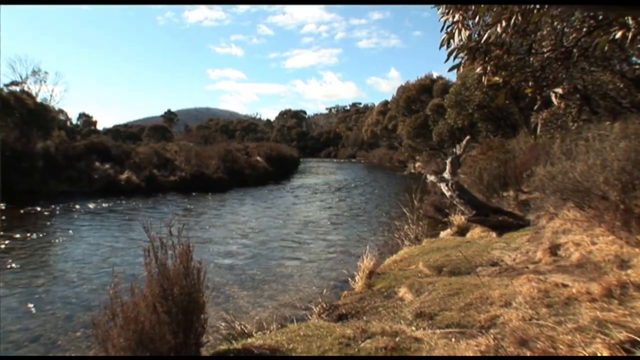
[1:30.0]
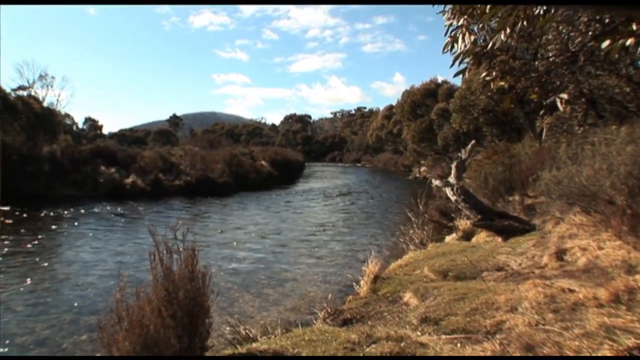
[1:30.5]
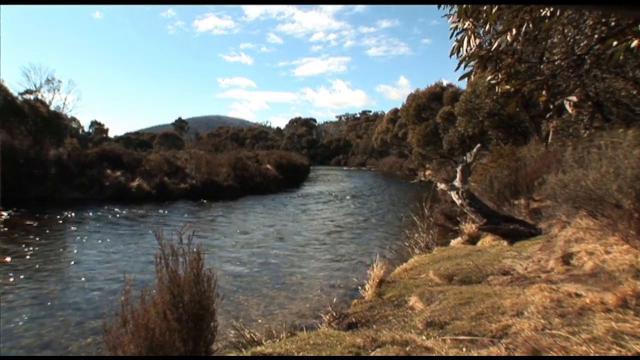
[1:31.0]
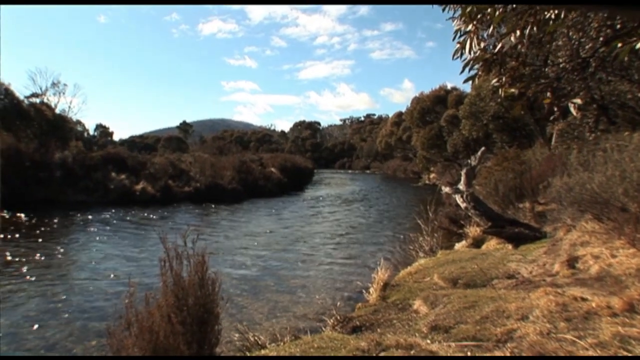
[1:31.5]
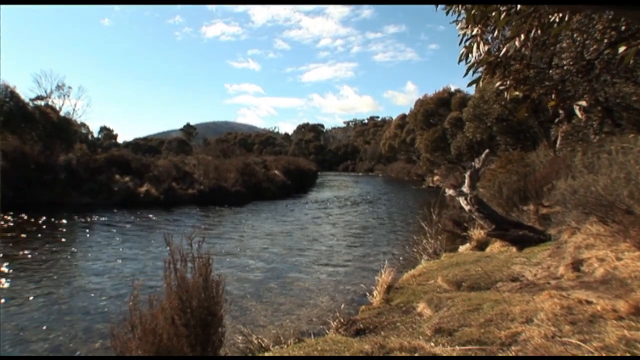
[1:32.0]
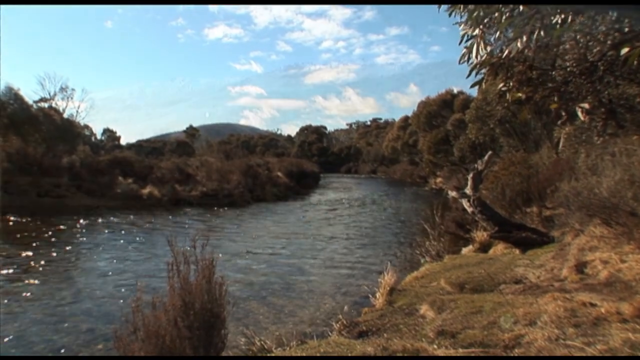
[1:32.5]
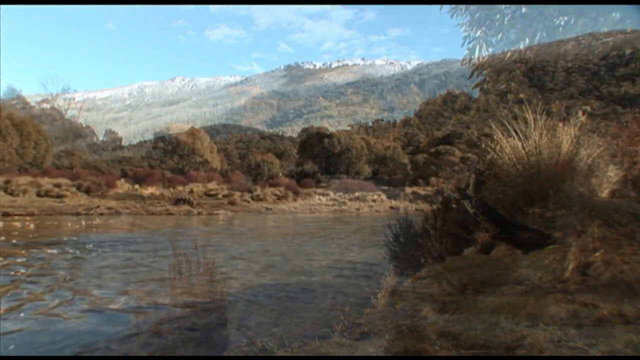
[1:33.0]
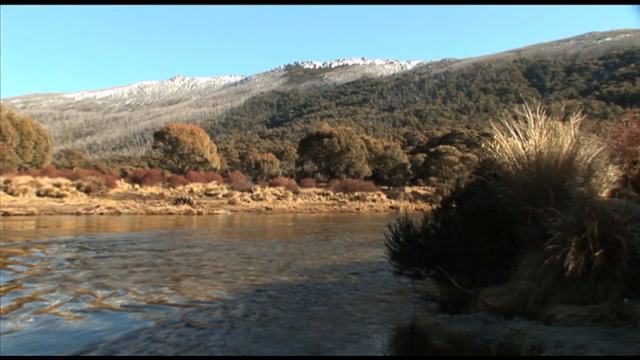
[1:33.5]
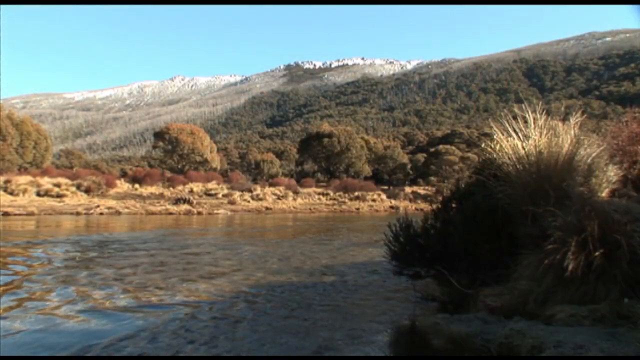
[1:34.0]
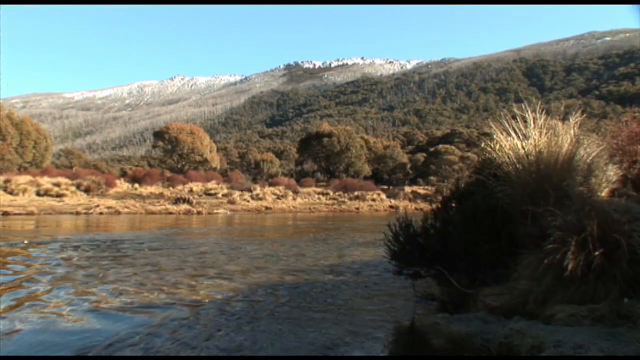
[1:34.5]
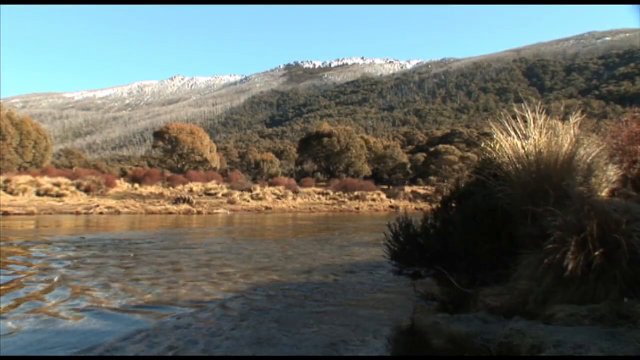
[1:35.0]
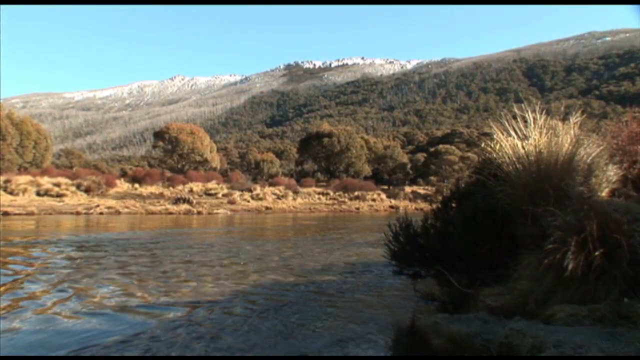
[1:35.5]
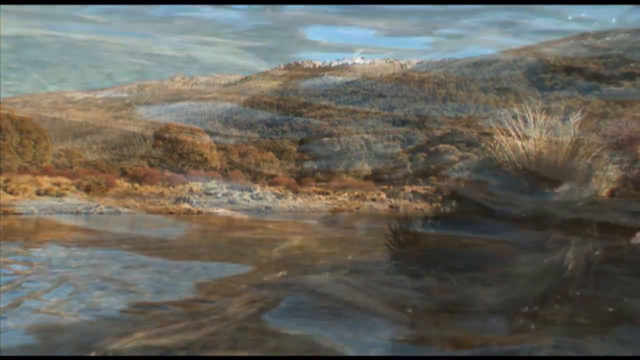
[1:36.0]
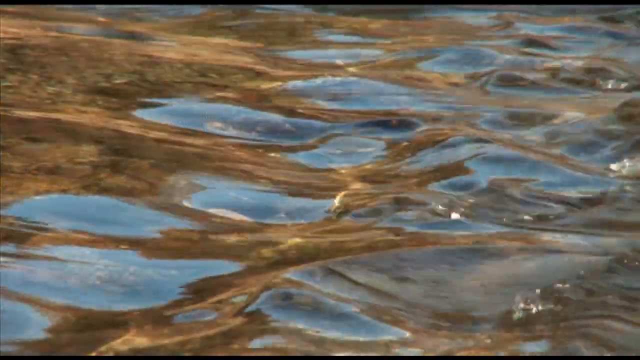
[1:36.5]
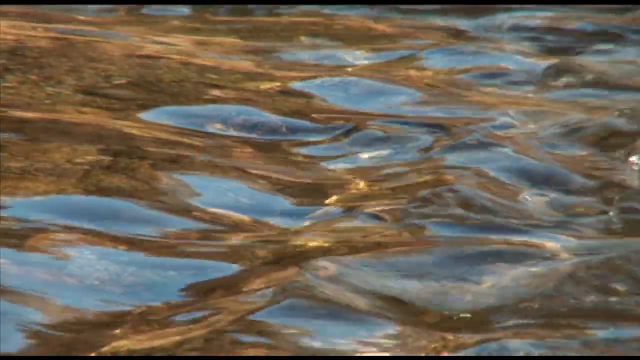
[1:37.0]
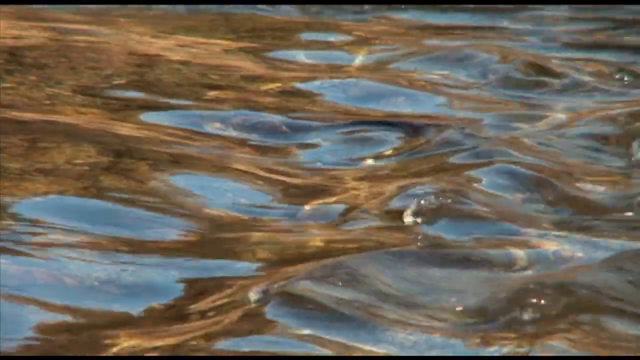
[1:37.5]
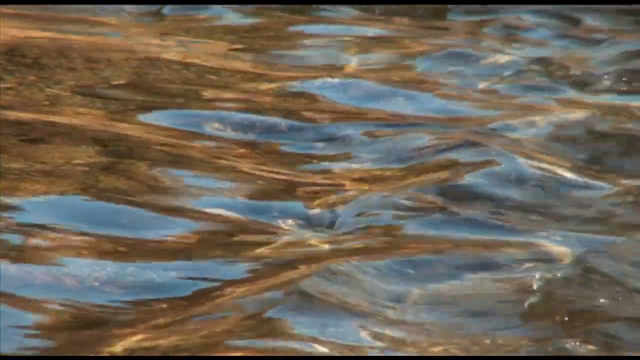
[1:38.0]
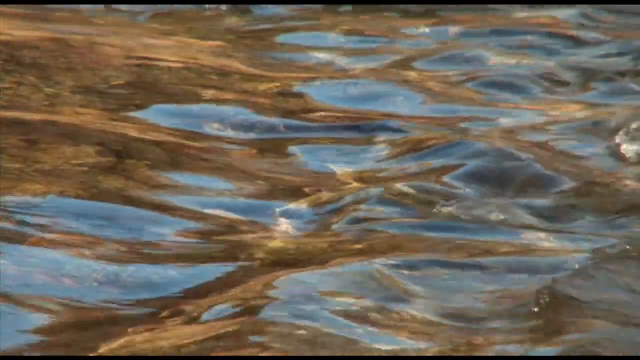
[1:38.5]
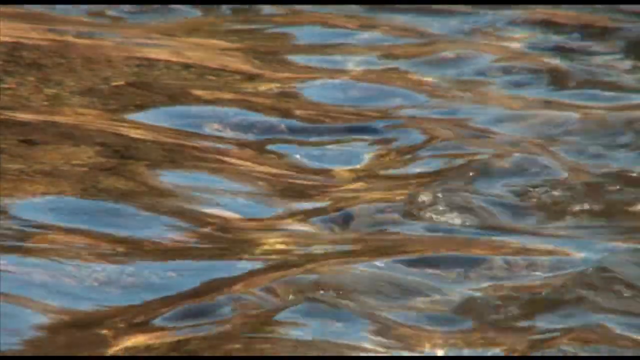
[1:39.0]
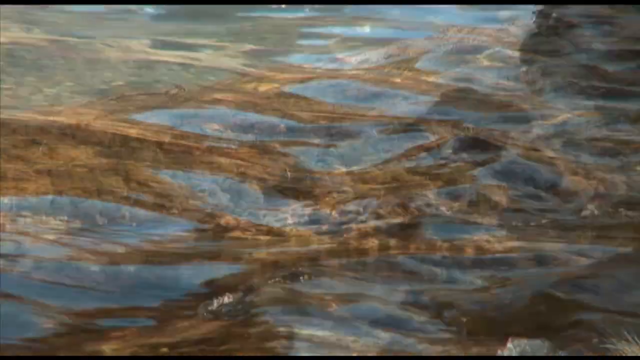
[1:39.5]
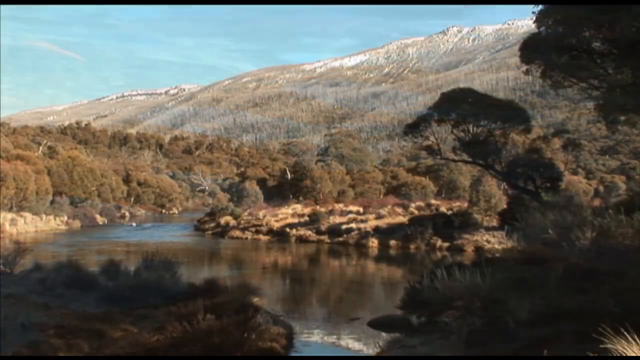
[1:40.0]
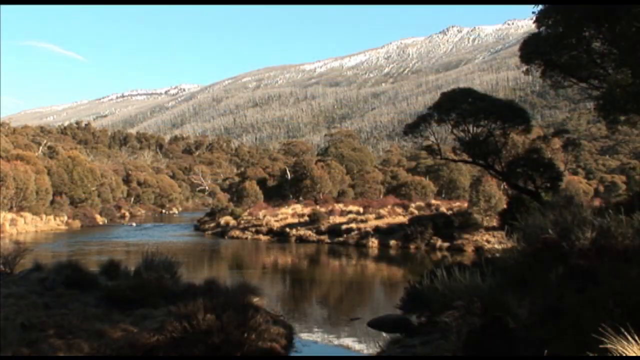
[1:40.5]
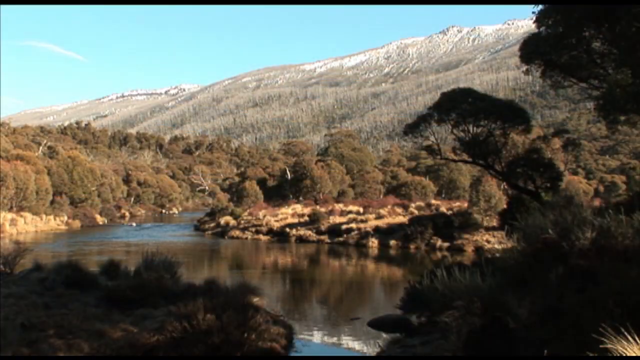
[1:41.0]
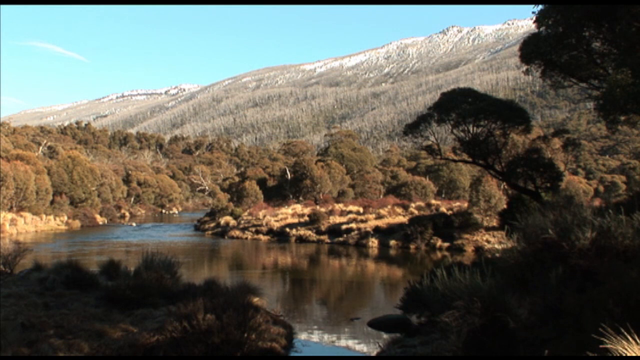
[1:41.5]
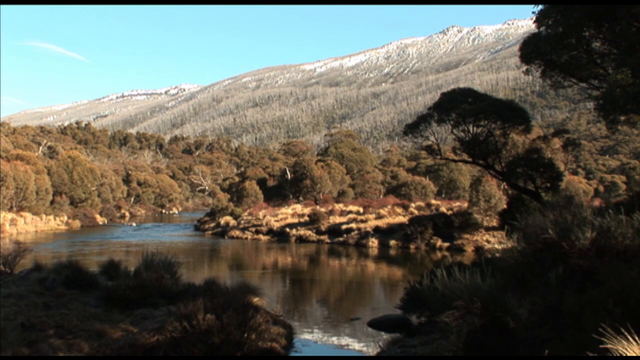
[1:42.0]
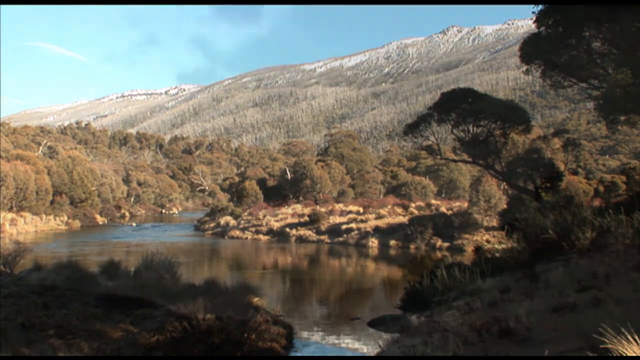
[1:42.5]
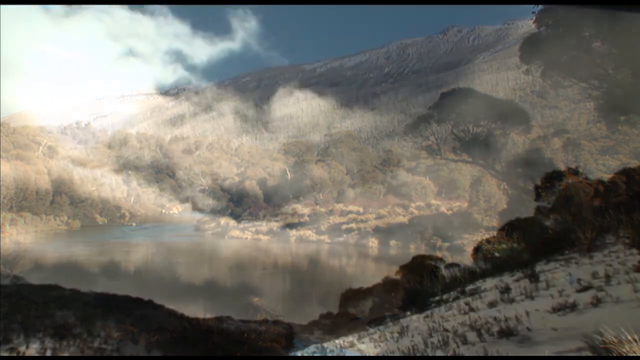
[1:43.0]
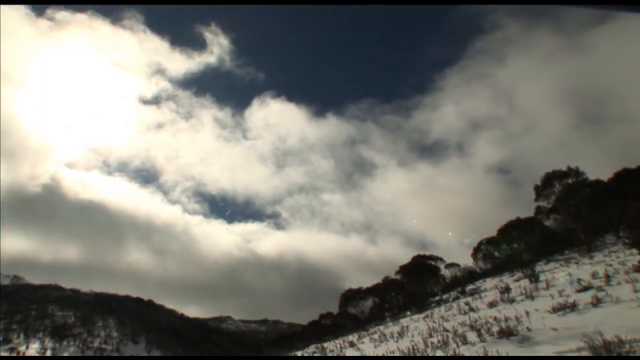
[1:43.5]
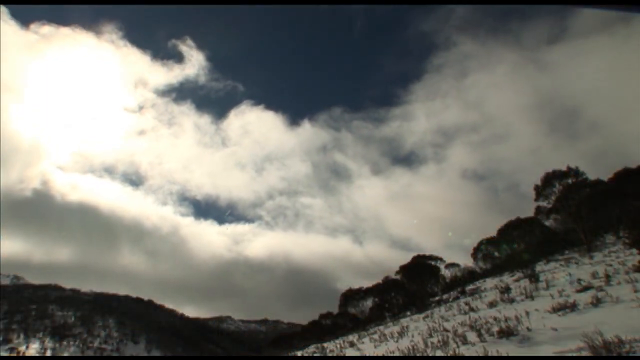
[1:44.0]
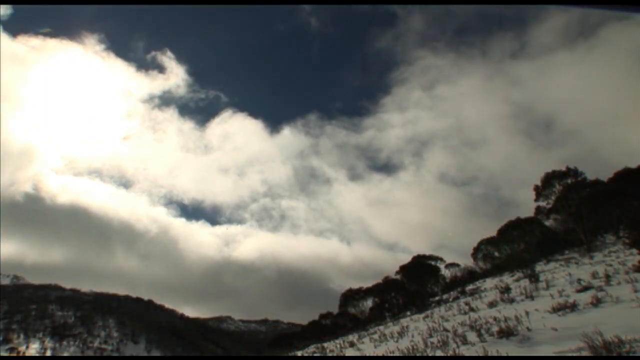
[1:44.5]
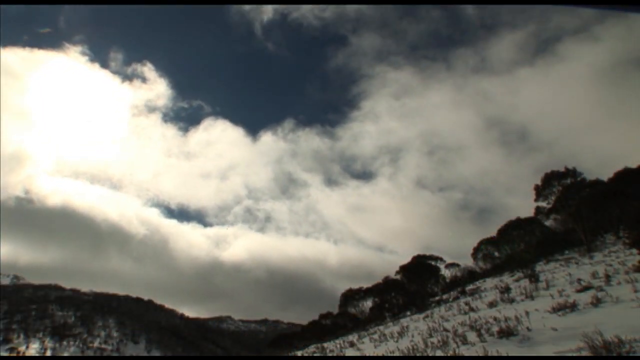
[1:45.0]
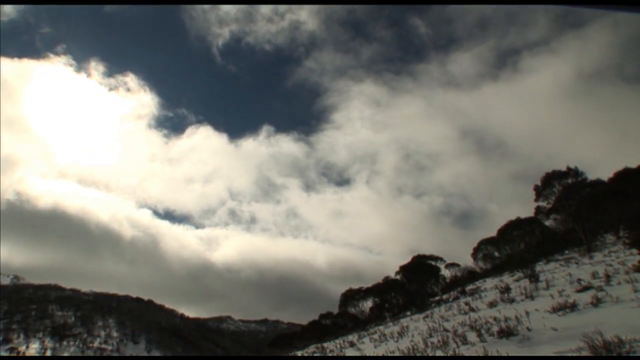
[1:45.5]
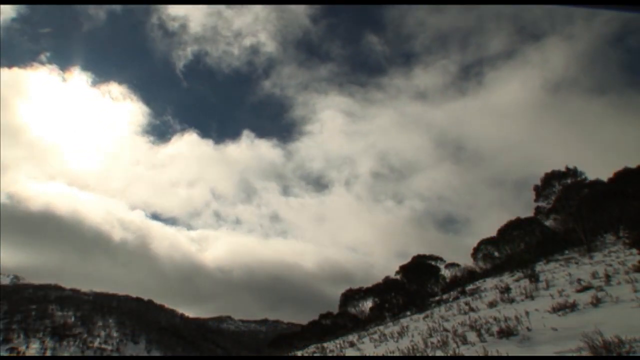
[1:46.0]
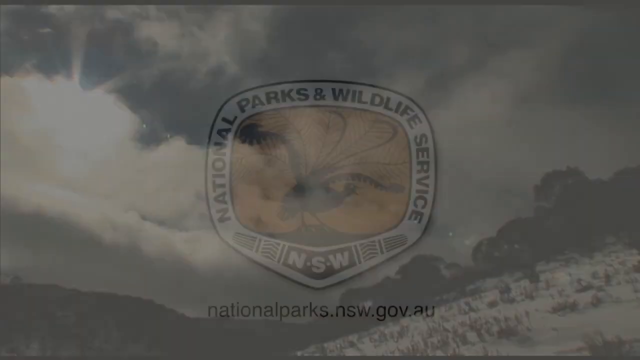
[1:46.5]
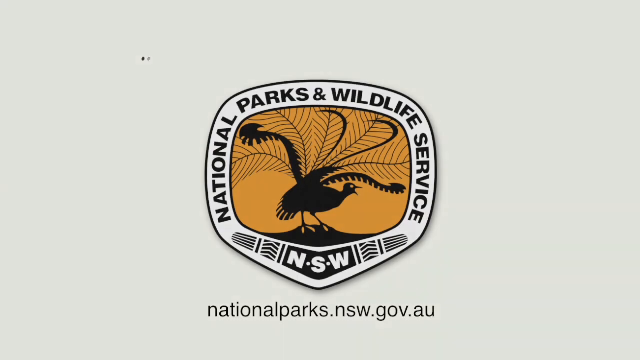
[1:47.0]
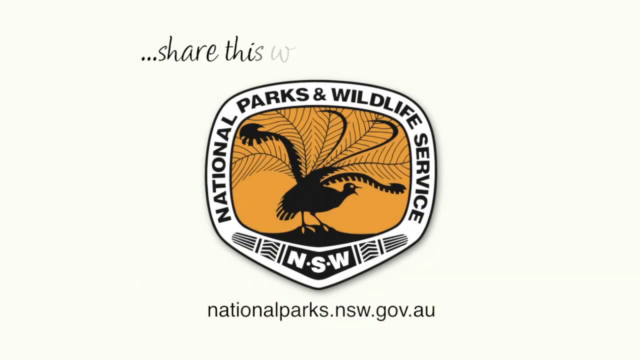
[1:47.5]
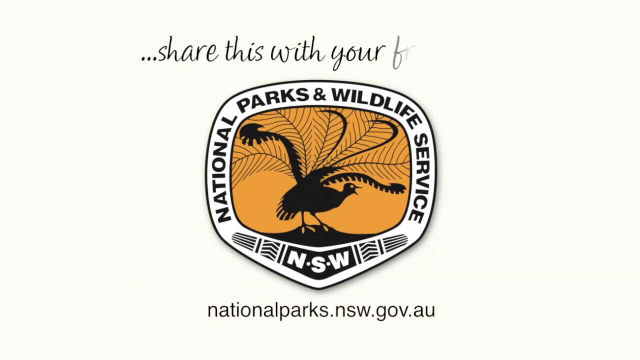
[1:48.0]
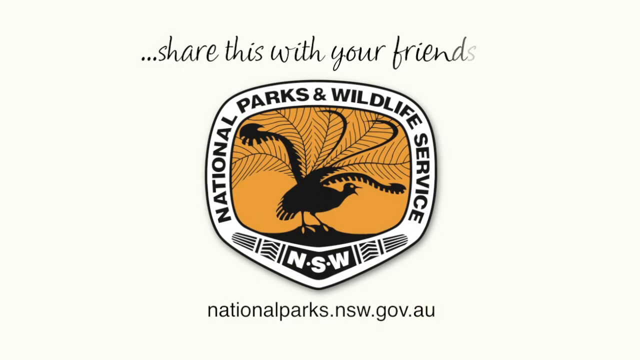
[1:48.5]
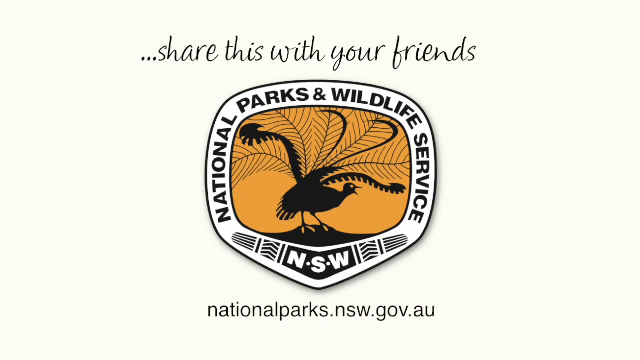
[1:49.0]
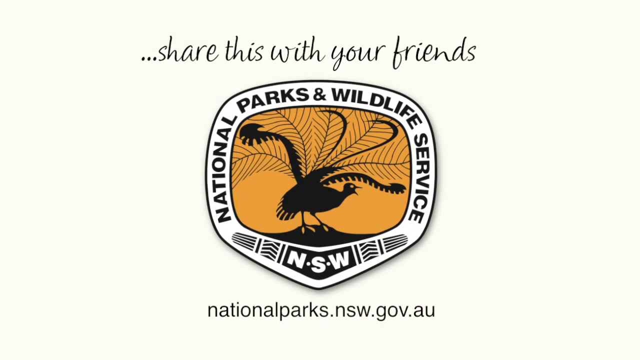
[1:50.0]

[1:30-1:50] The river has a similar kind of S shape, with trees and bushes on either side, a blue sky and white clouds. The shot cuts to the snowy tops of mountains in the back, and then to a close-up of the water rippling as it flows; the water is quite clear, so the bottom of the river can be seen through it. Another scene shows the river at the front and the mountains at the back. Snowy mountains follow, with clouds moving quickly from the right-hand side to the left. The logo from the start returns: "National Parks and Wildlife Service" with an orange-yellow centre containing a bird silhouette with feather-like protrusions coming out of the top and a fan tail, standing on two legs with its beak open. At the bottom of the logo is a boomerang-type shape with "NSW" in the centre and aboriginal-style patterns on either side. At the bottom is "nationalparks.nsw.gov.au", and at the top is "share this with your friends" in thin, more italic text.